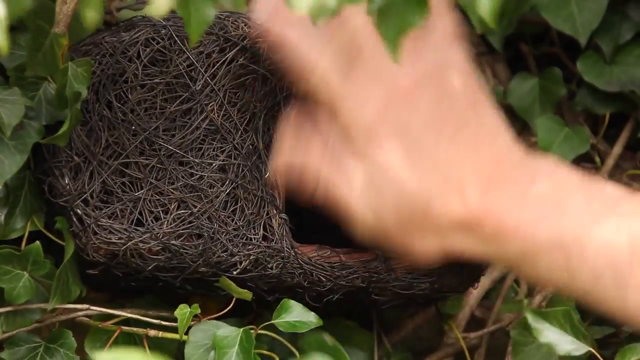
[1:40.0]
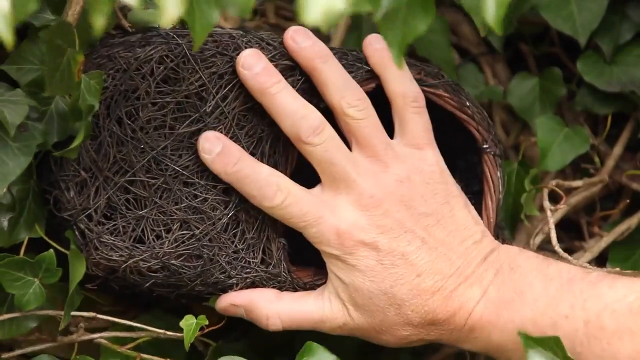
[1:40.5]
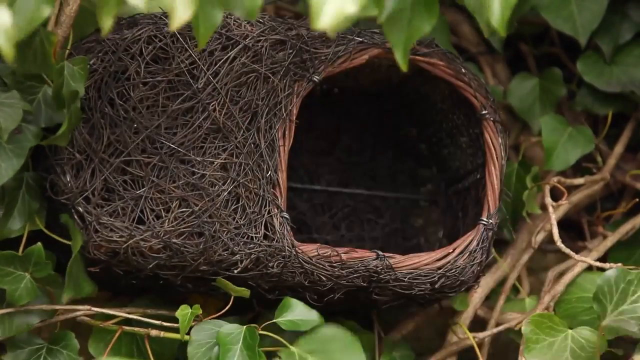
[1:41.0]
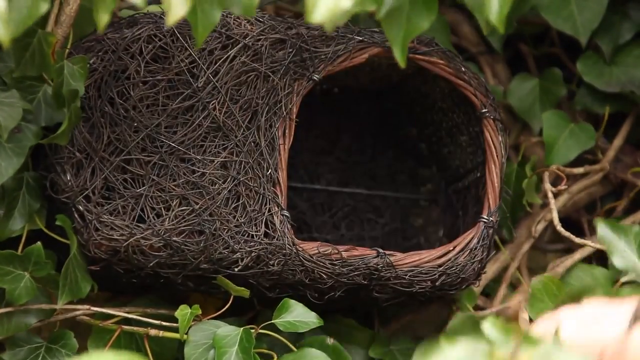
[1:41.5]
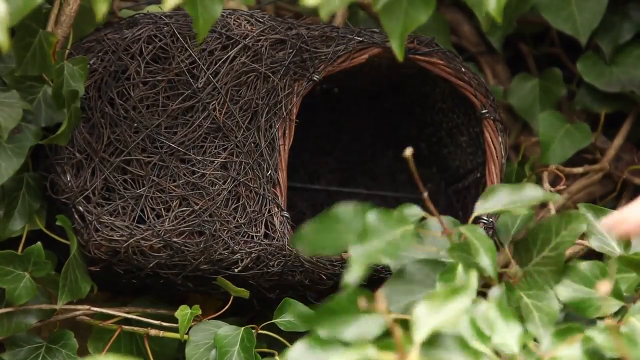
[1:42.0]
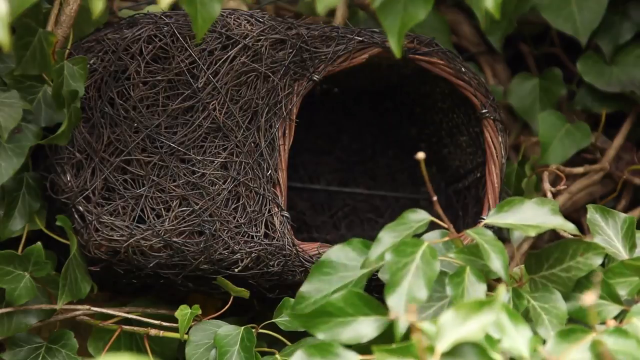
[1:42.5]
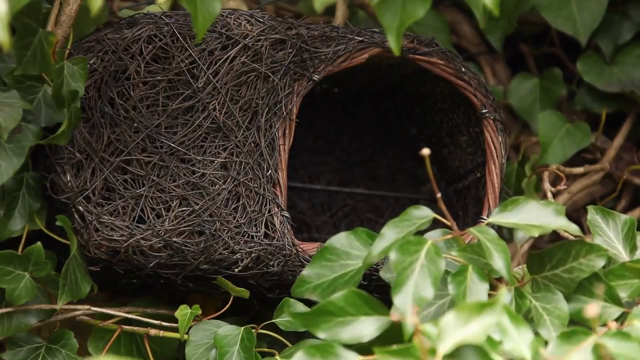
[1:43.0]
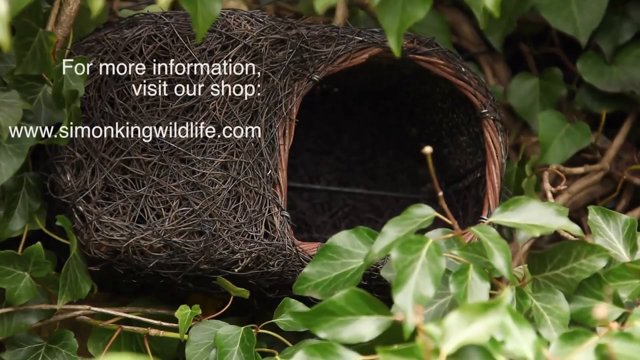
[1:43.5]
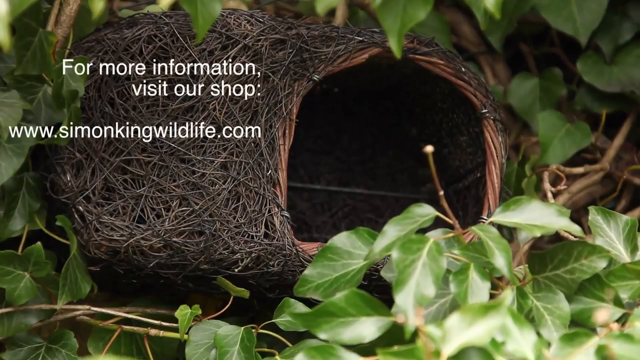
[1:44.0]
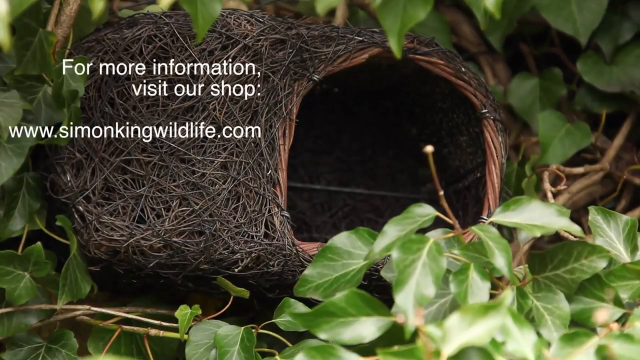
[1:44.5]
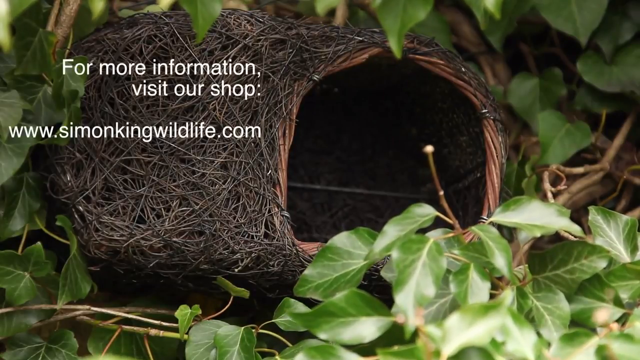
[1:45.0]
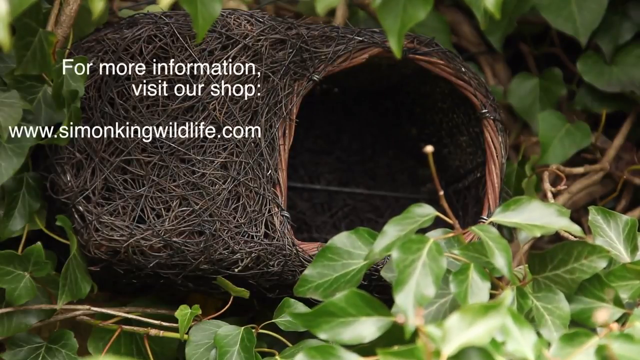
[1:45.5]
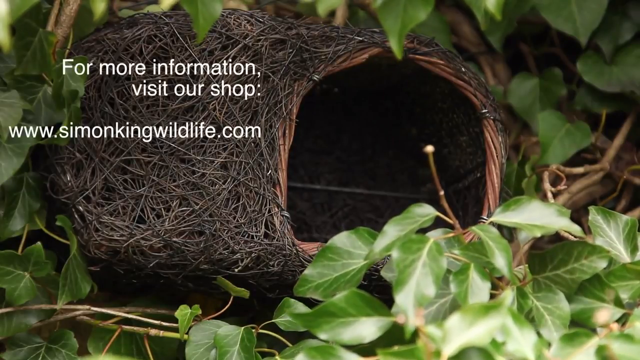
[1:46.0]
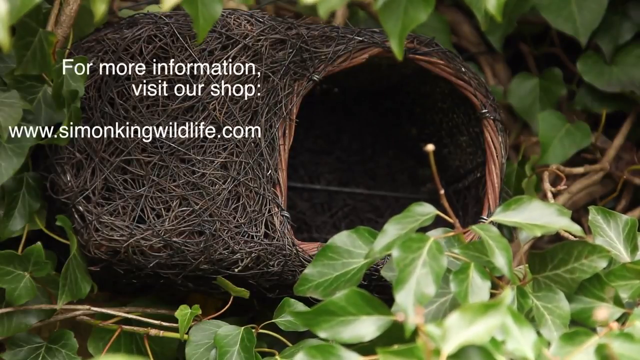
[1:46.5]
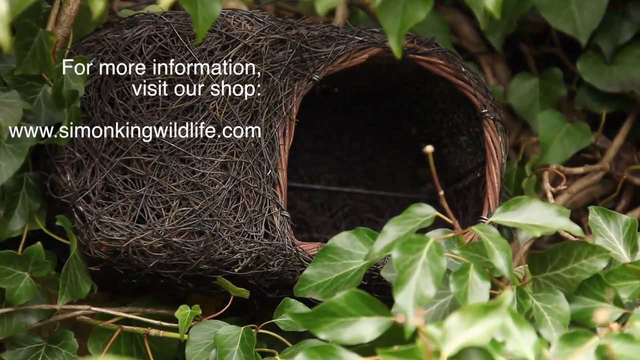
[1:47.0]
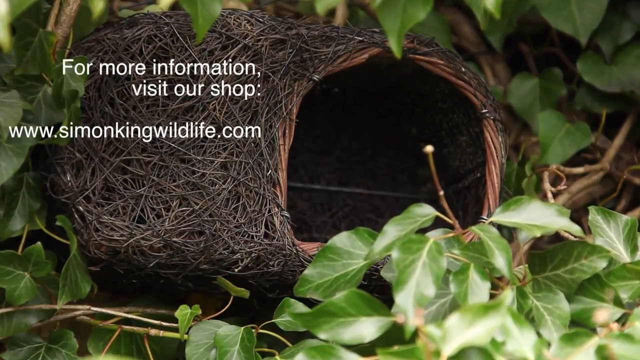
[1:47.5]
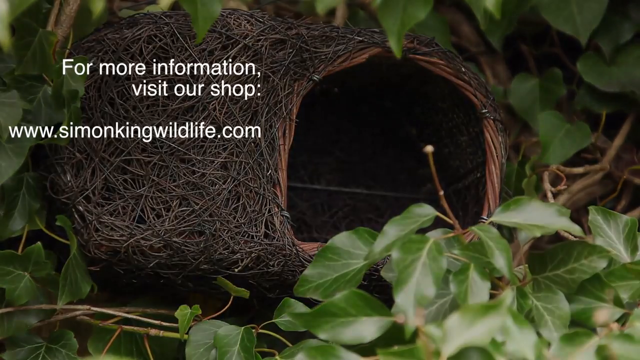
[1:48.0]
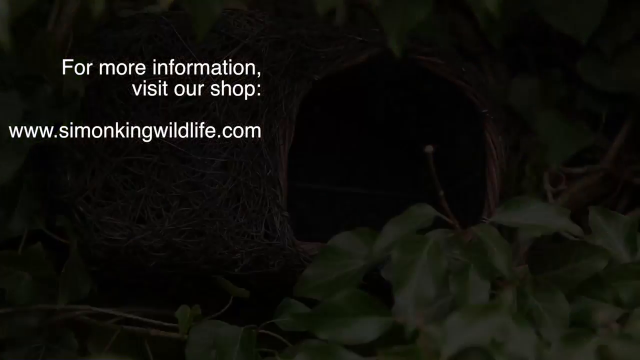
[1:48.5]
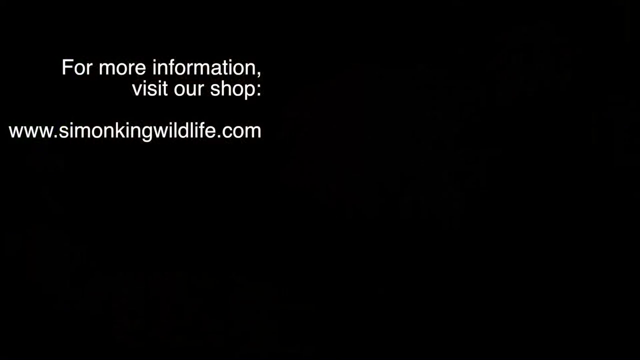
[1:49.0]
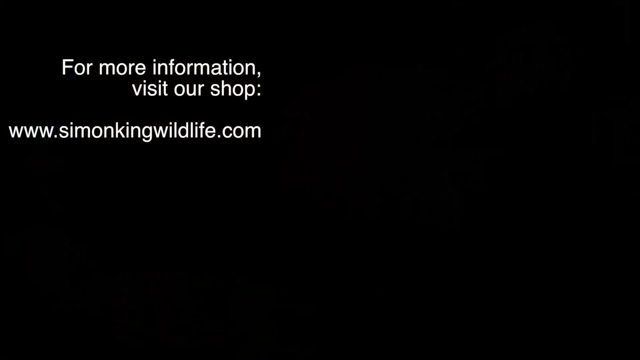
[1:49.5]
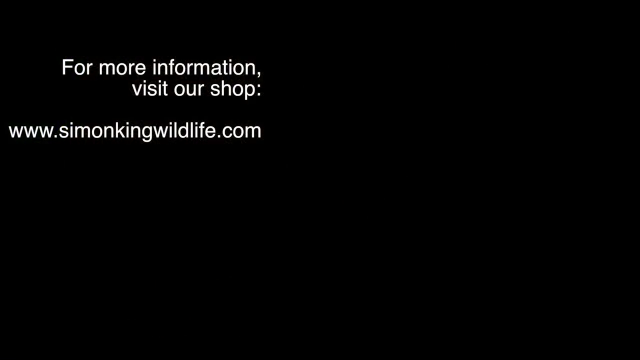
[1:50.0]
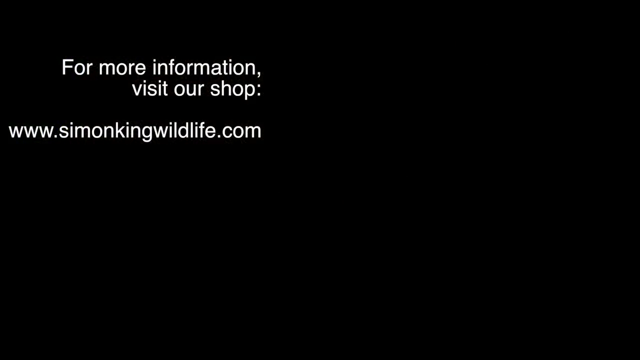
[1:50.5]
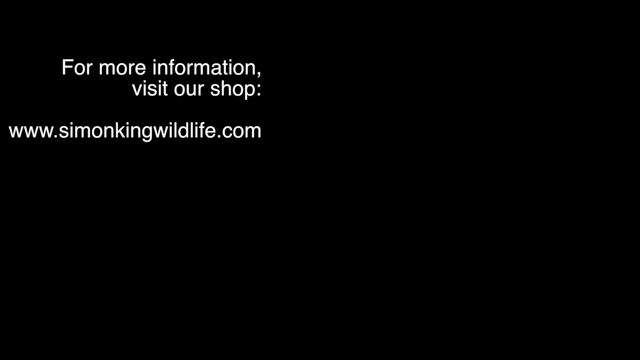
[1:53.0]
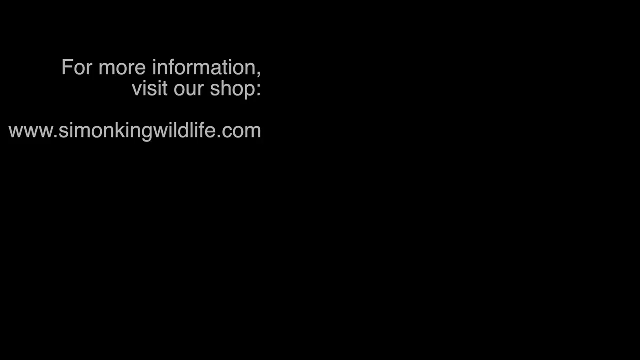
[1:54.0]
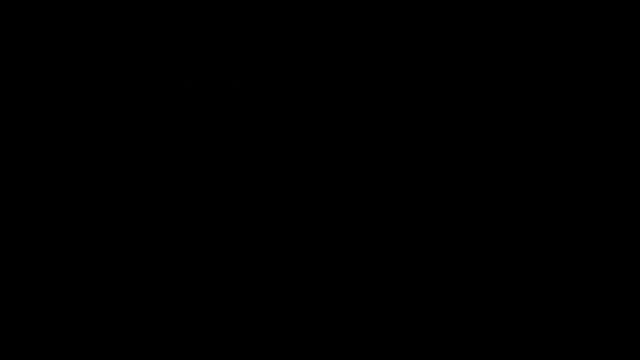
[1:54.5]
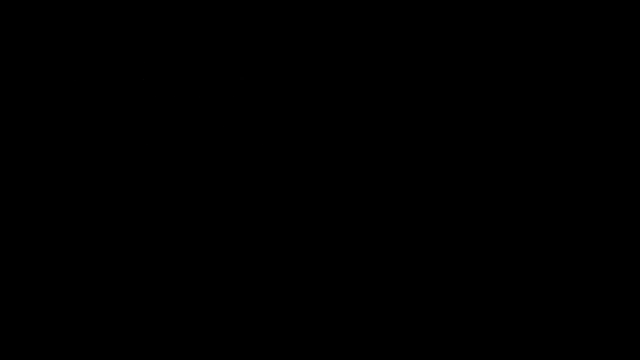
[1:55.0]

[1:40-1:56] A nest is in an area with green leaves around it. The nest looks like it is made of very small, soft pieces of wood and is brown. The man places it there, and it looks comfortable and well positioned. At the end, he says "for more information this is our shop". The nest is apparently the nest box.